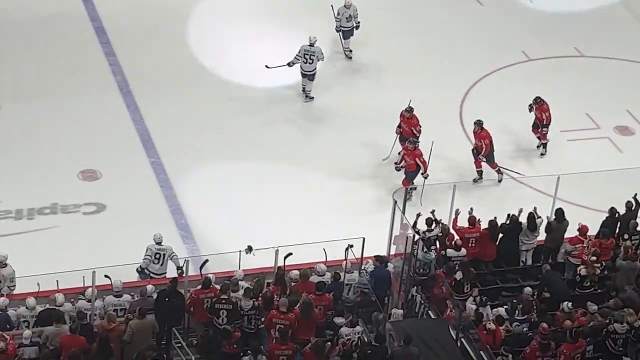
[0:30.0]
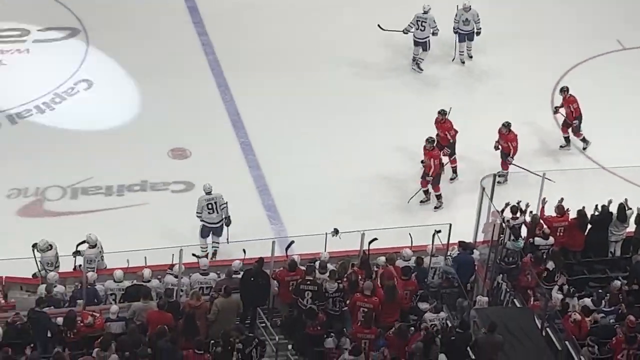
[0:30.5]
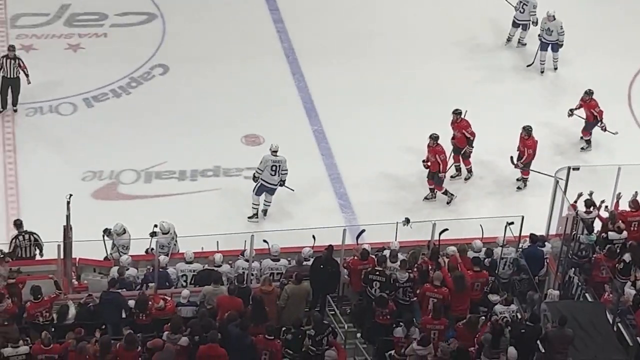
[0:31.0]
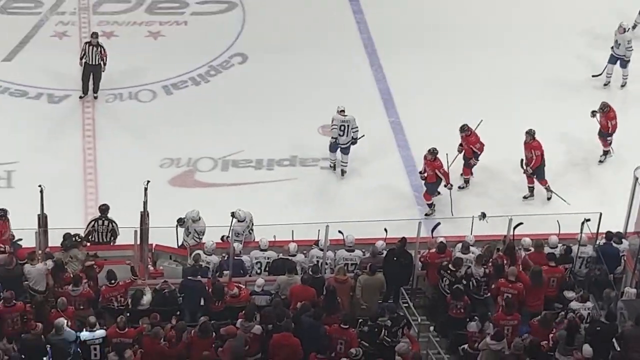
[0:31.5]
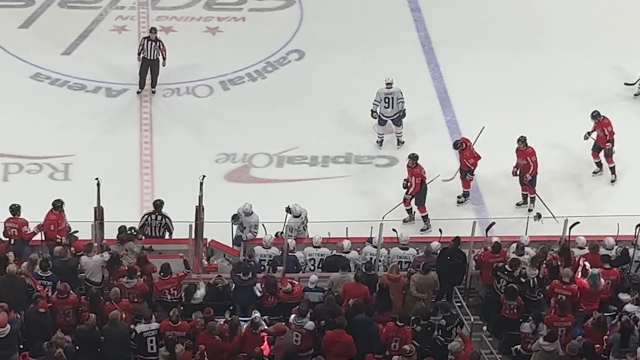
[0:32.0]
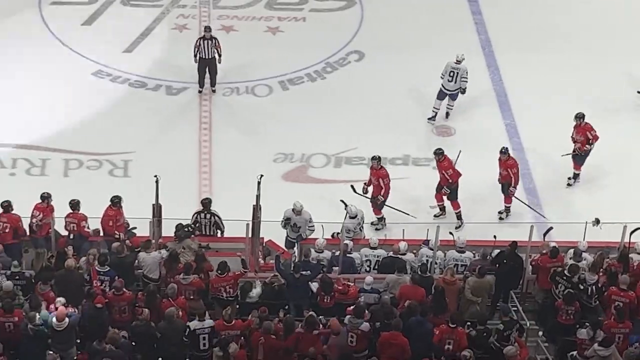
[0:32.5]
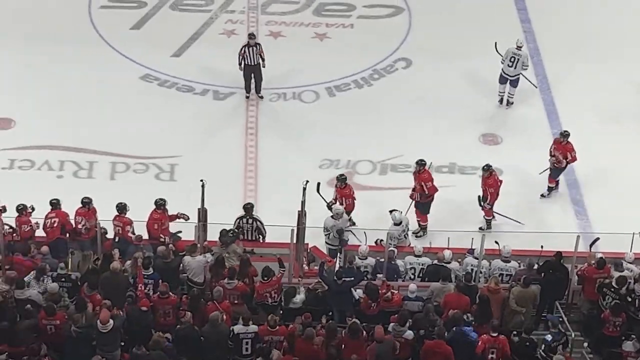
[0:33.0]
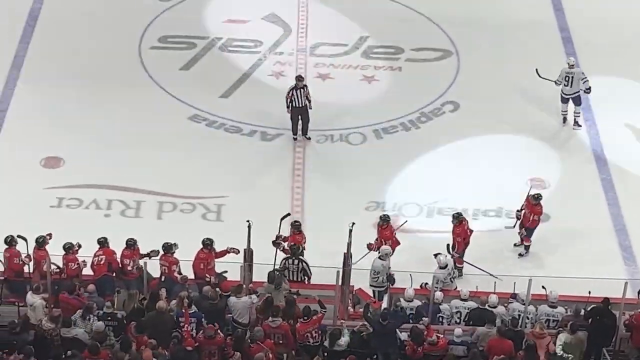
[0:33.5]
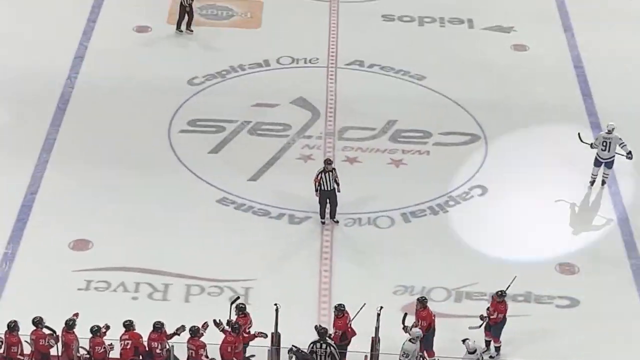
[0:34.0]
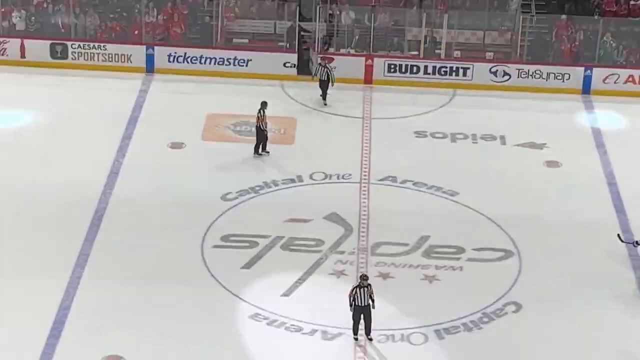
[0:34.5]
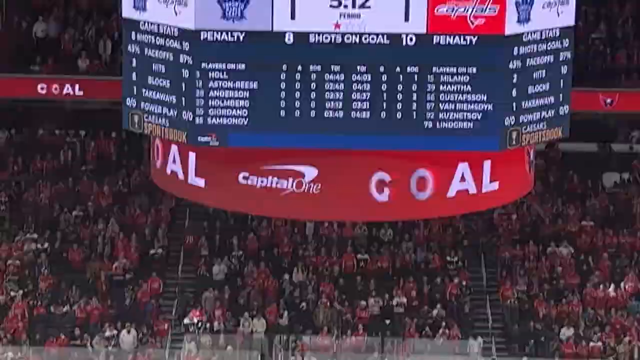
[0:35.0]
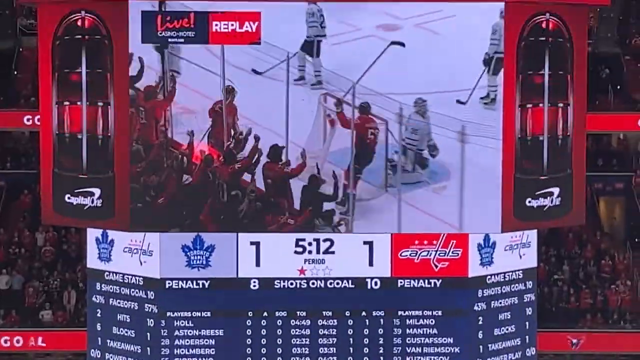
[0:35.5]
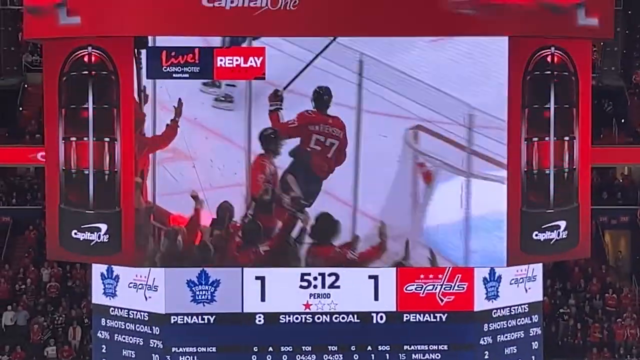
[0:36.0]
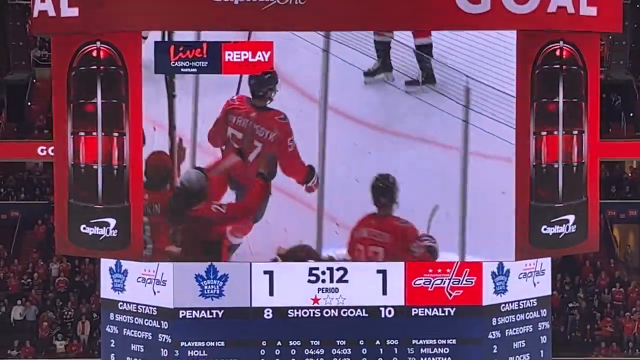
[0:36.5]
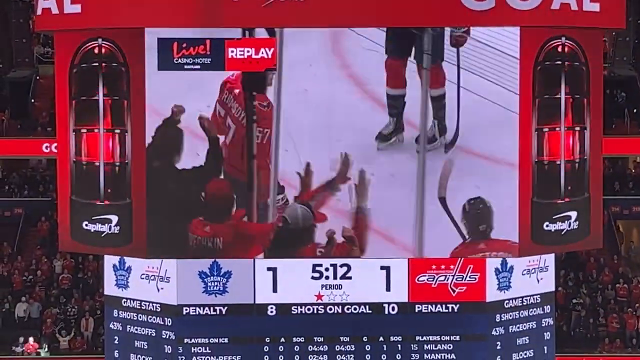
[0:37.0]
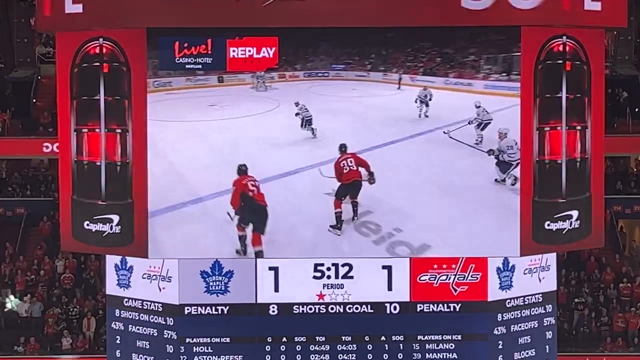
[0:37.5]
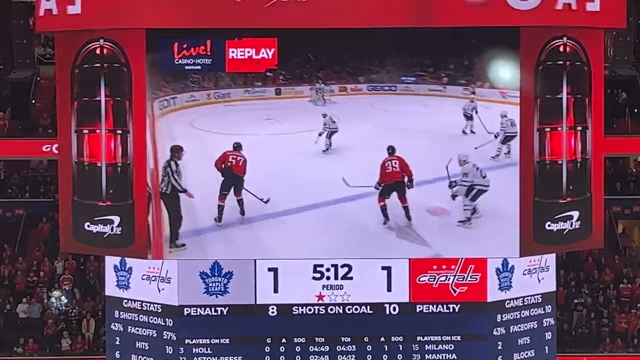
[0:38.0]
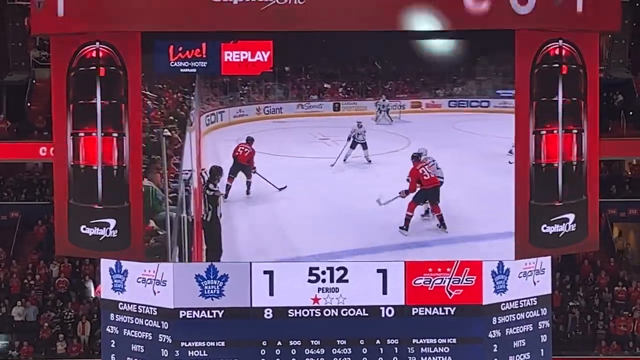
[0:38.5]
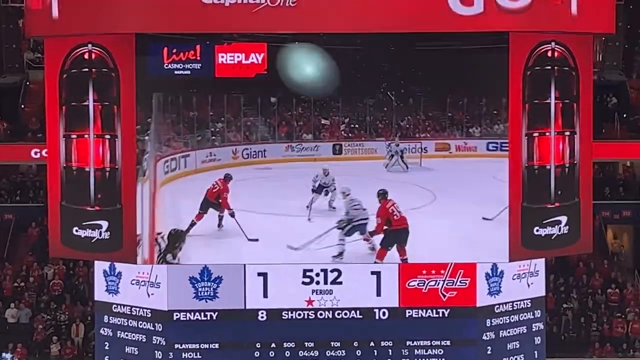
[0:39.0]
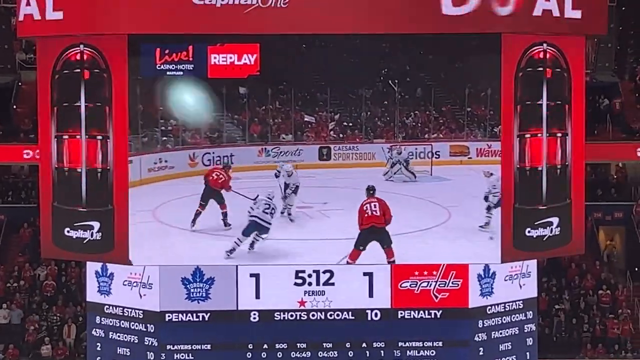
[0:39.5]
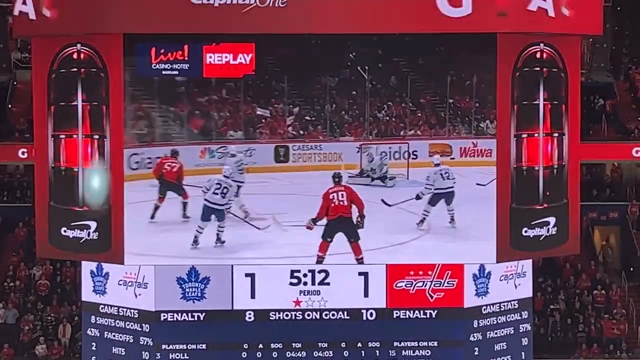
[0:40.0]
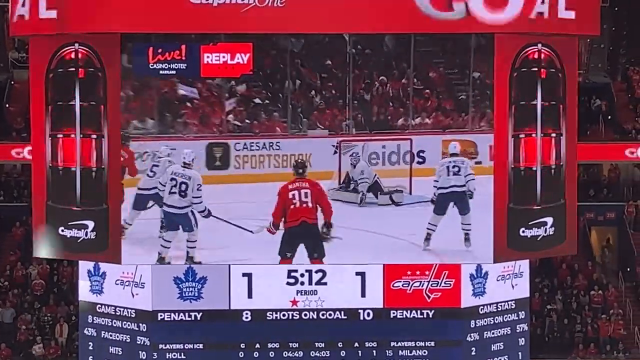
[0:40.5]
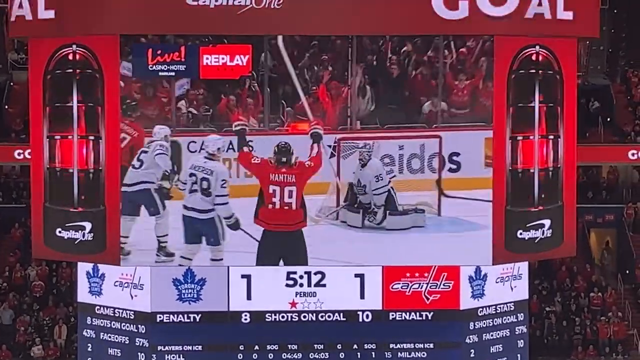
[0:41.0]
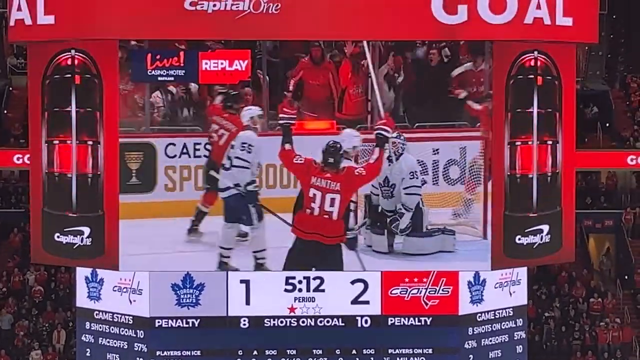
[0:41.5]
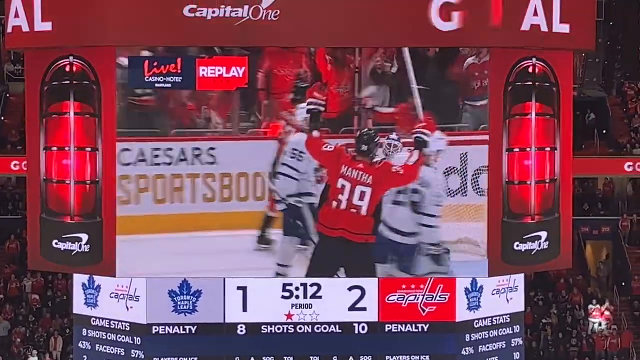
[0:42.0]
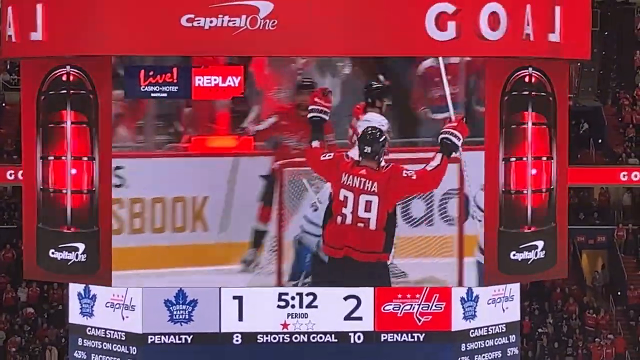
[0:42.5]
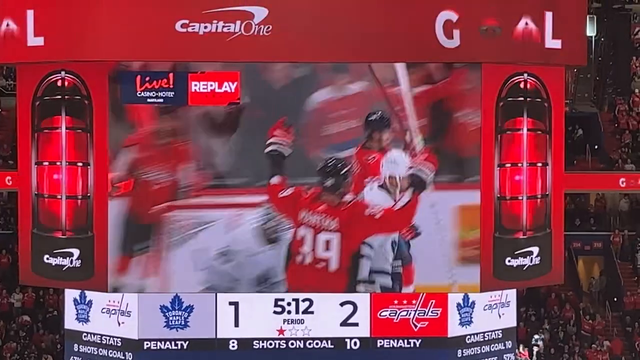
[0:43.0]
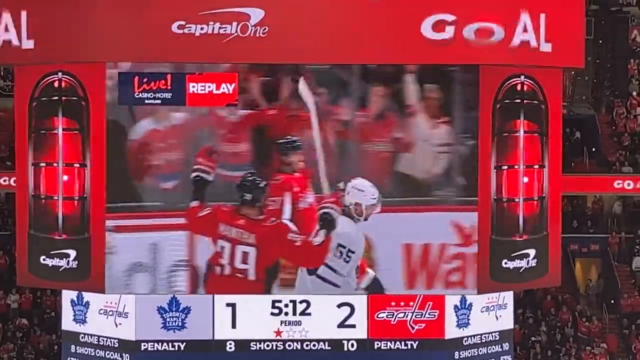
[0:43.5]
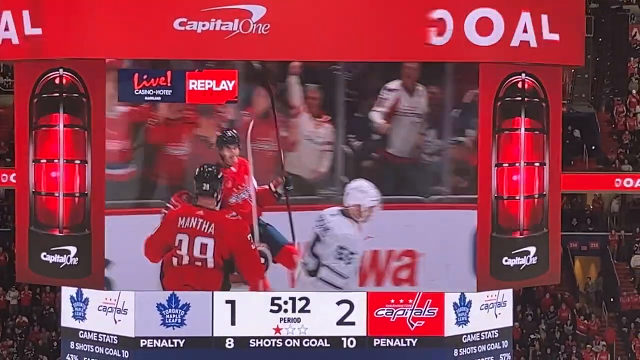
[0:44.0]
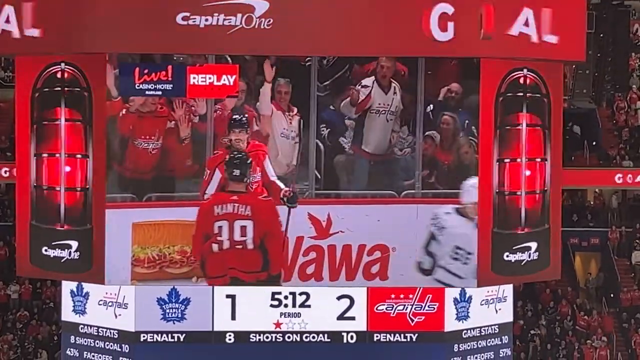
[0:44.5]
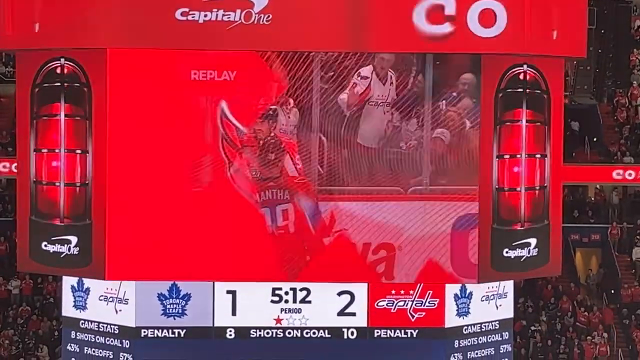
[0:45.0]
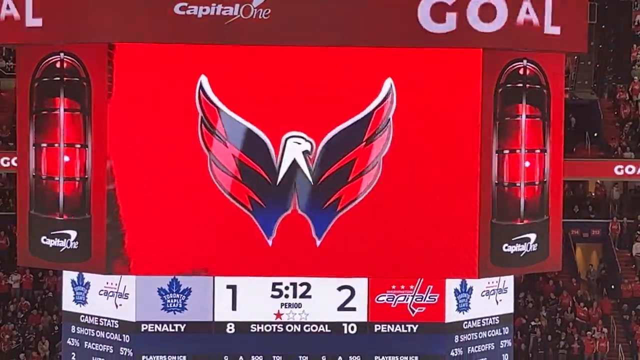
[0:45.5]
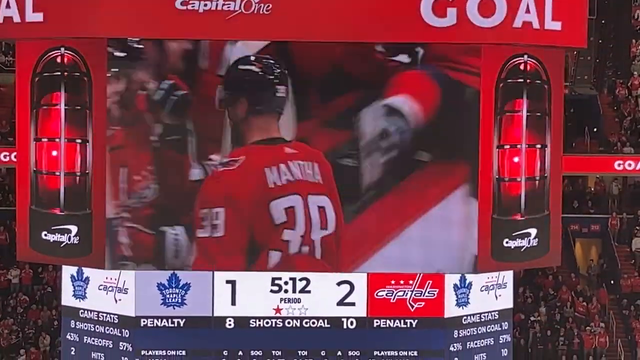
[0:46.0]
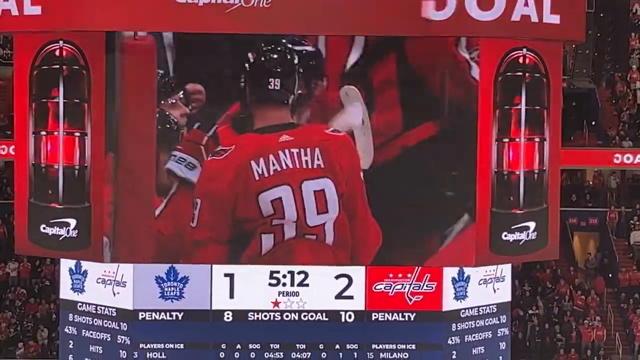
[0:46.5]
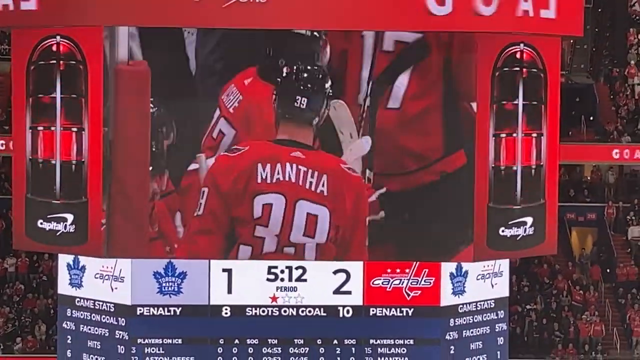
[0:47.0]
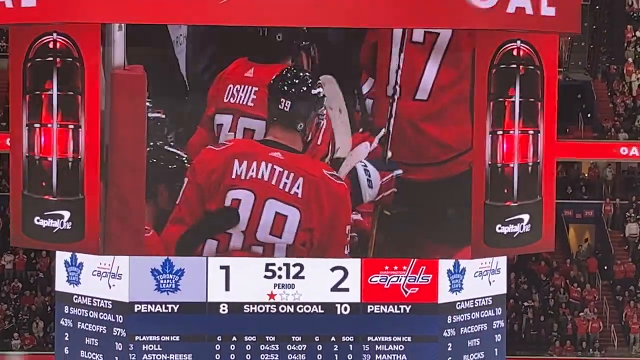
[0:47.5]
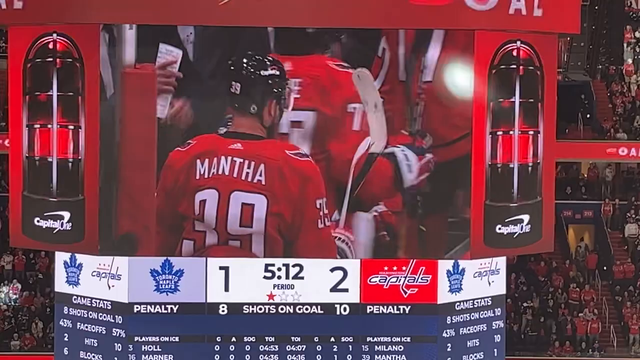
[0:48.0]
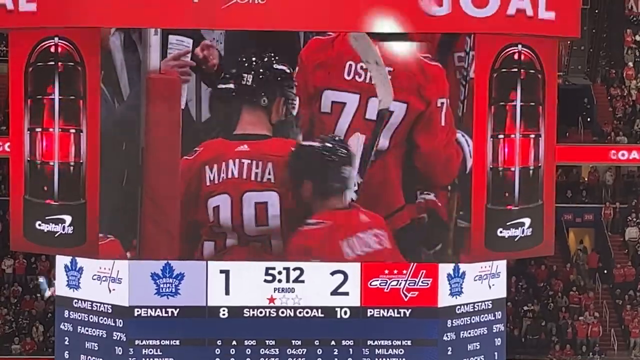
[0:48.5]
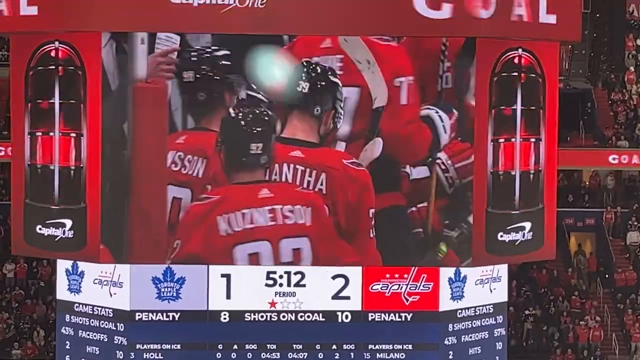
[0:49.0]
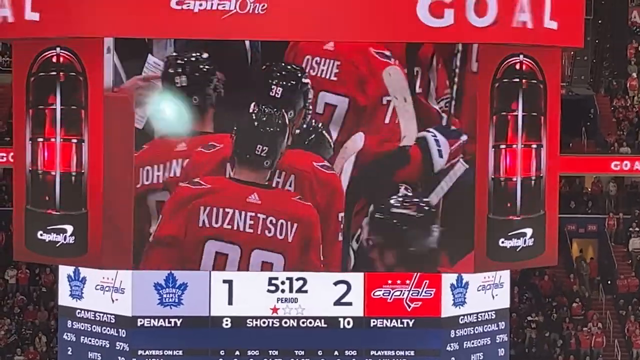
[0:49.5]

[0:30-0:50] The scoreboard switches to a live replay of how the goal was scored. The red-team players look like the Red Wings as each one is seen. The white team is not fully shown in the replay, and they look sad. The replay keeps being shown while the crowd appears to be cheering. The ice is white with markings on it, and the markings suggest this is apparently a Capital One arena.